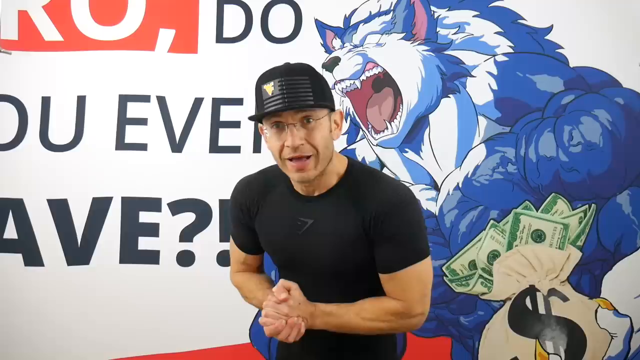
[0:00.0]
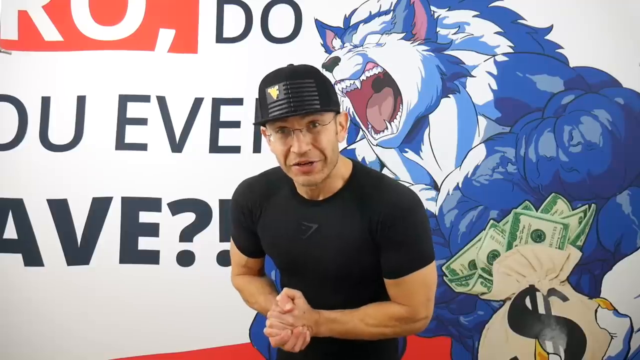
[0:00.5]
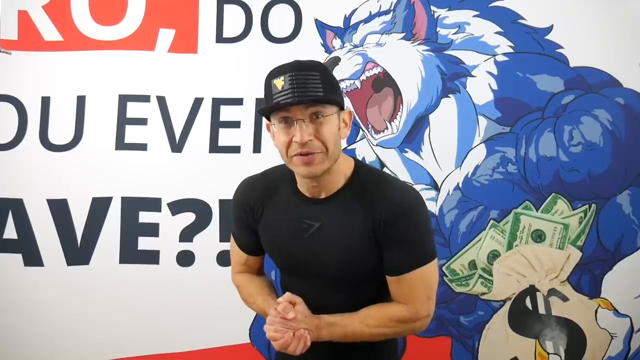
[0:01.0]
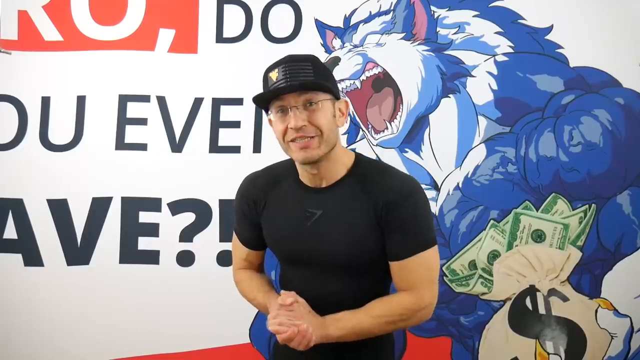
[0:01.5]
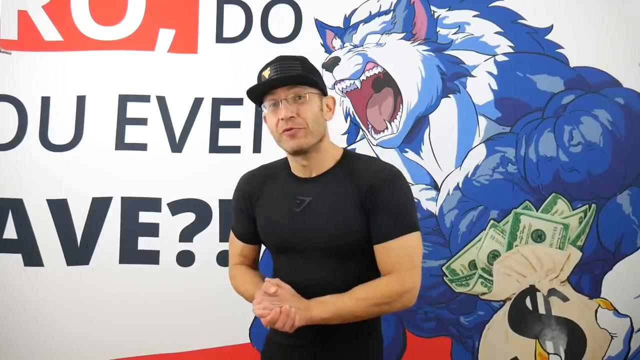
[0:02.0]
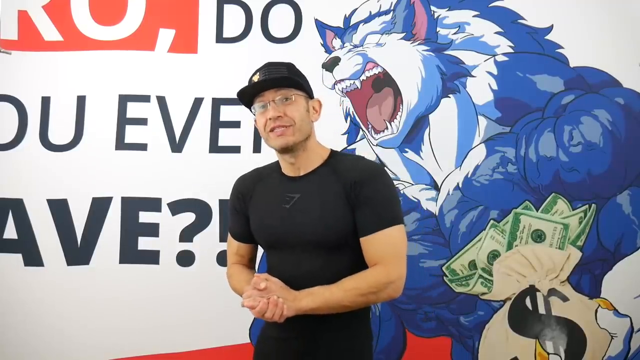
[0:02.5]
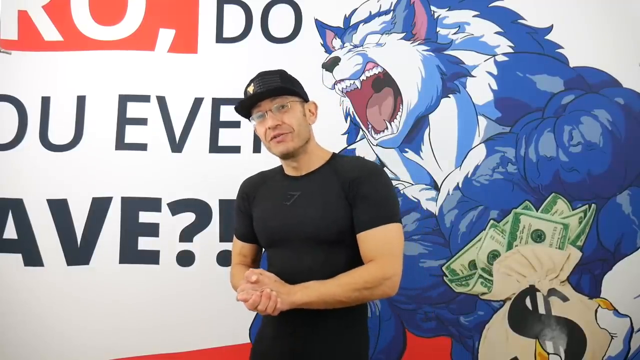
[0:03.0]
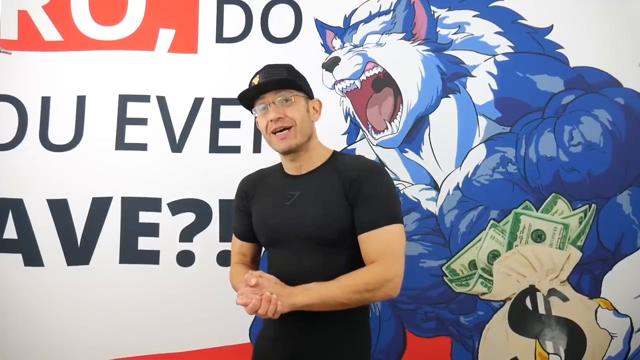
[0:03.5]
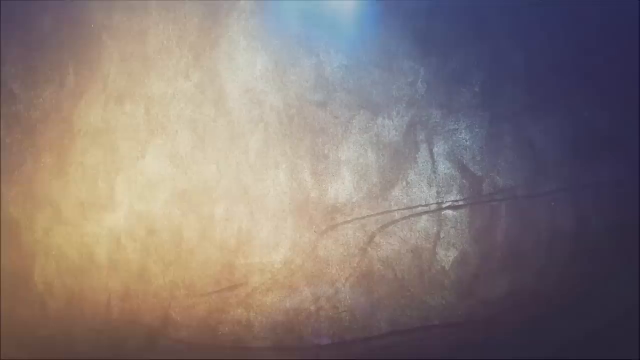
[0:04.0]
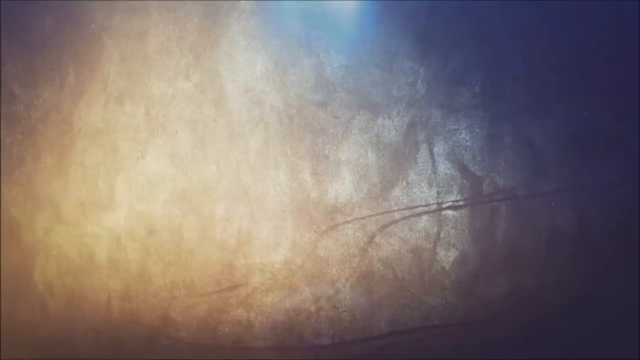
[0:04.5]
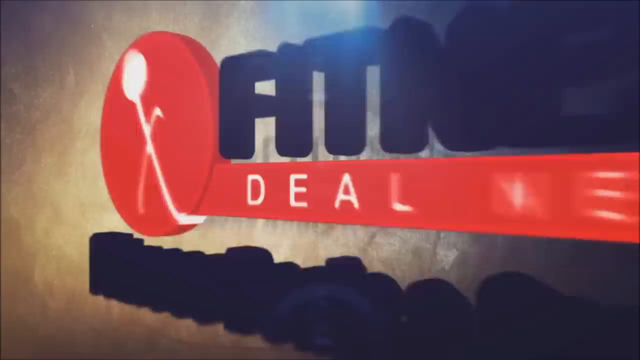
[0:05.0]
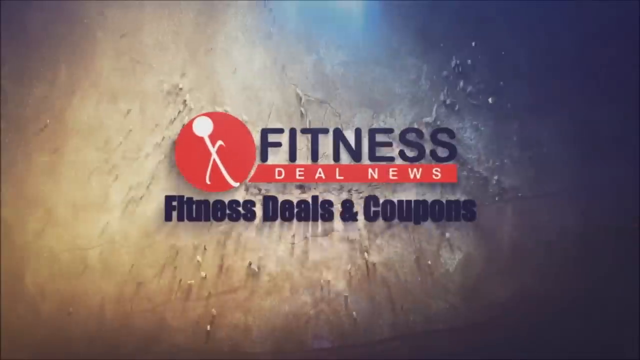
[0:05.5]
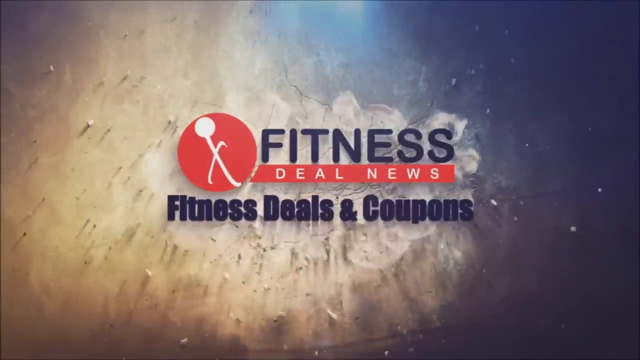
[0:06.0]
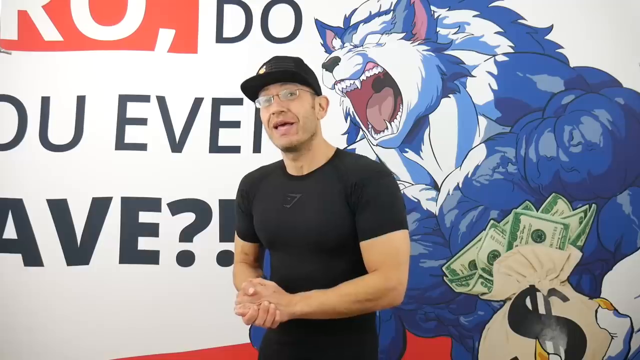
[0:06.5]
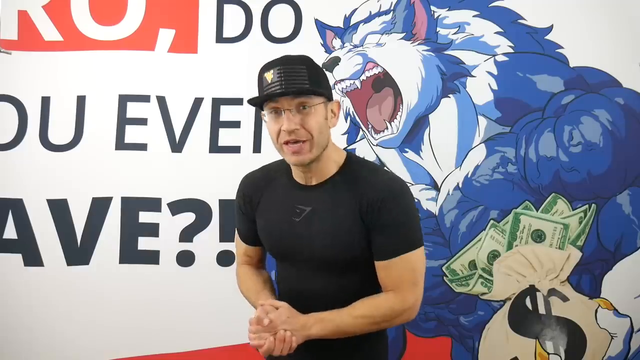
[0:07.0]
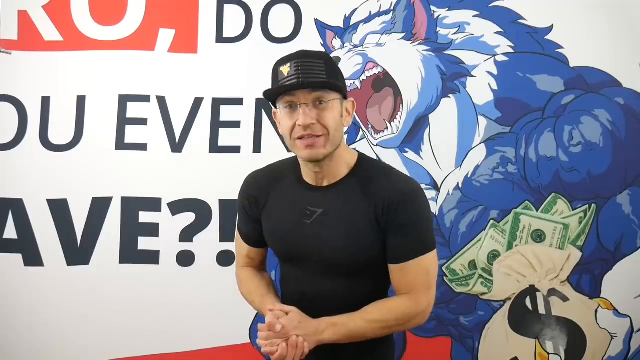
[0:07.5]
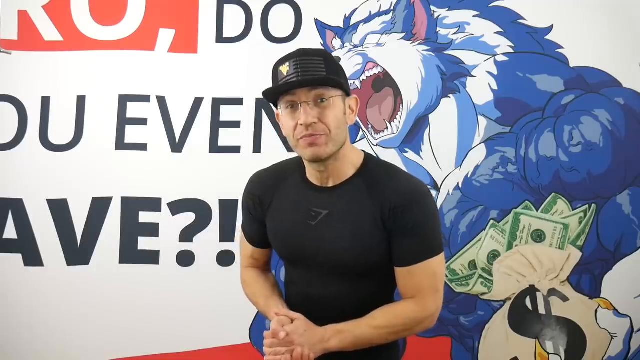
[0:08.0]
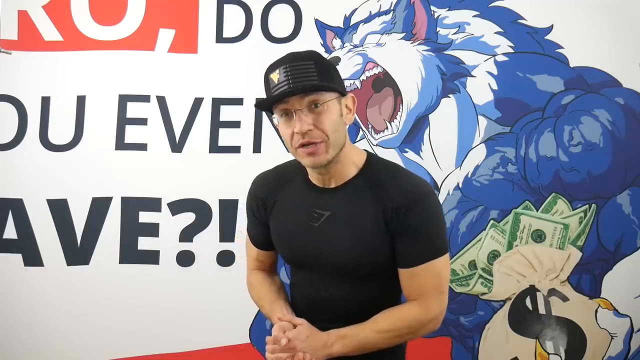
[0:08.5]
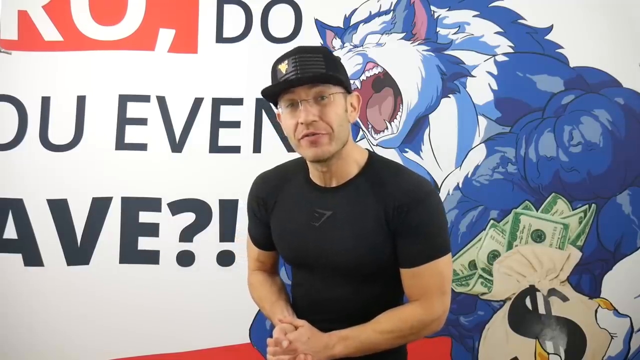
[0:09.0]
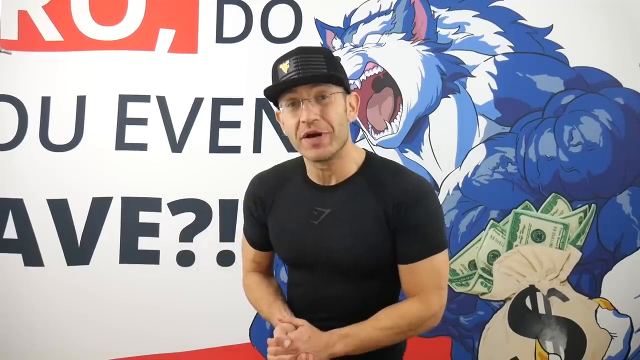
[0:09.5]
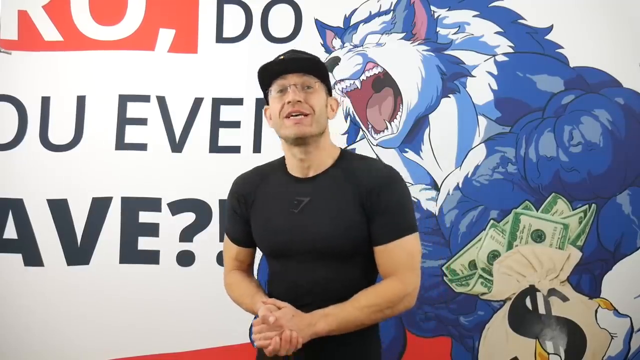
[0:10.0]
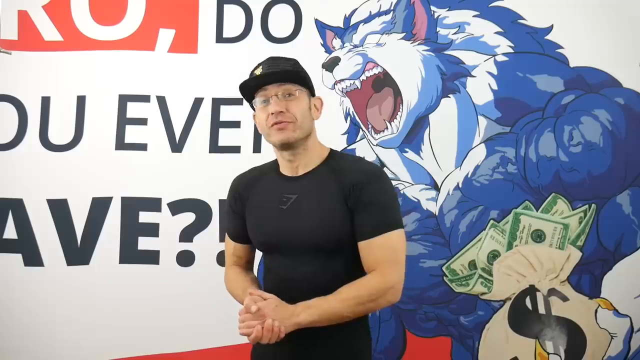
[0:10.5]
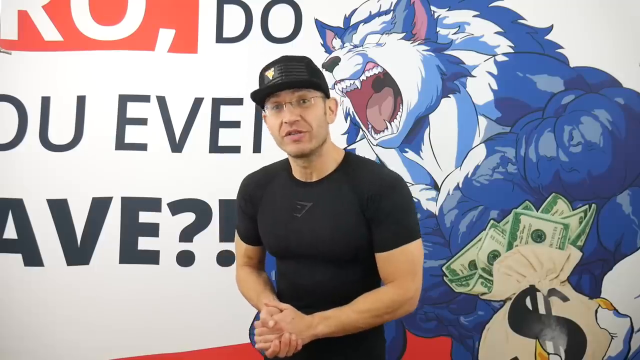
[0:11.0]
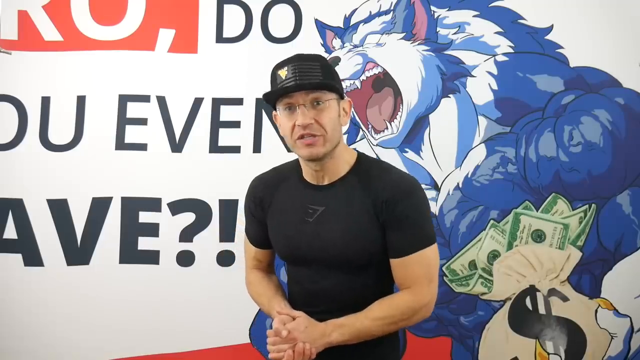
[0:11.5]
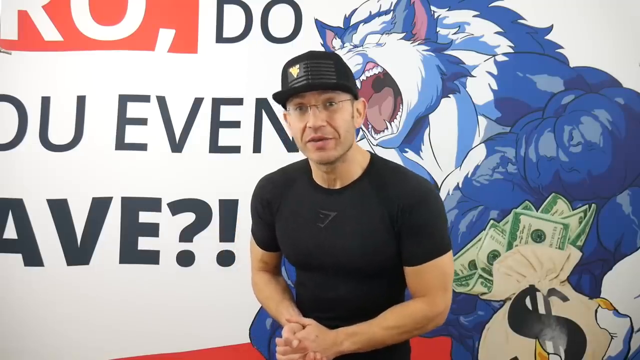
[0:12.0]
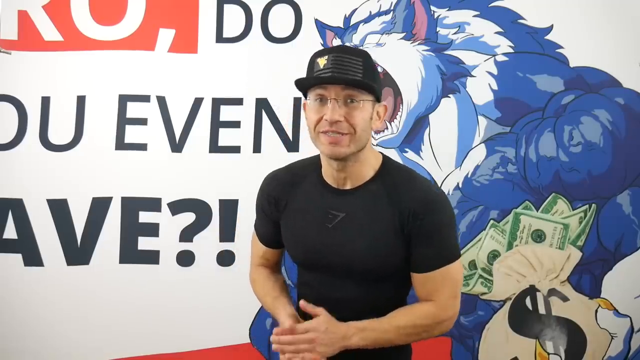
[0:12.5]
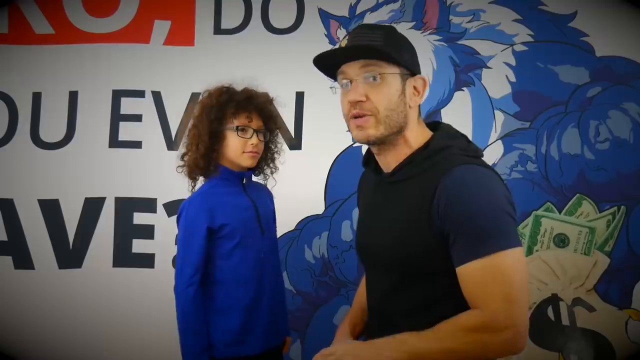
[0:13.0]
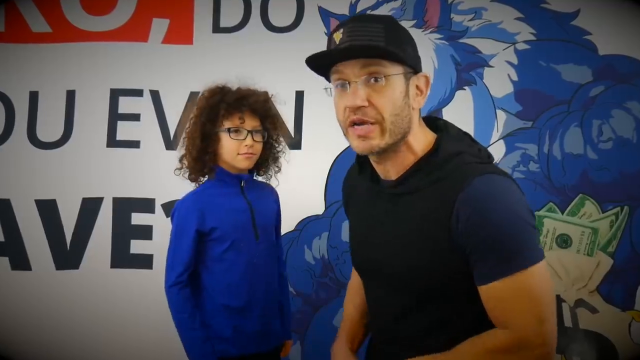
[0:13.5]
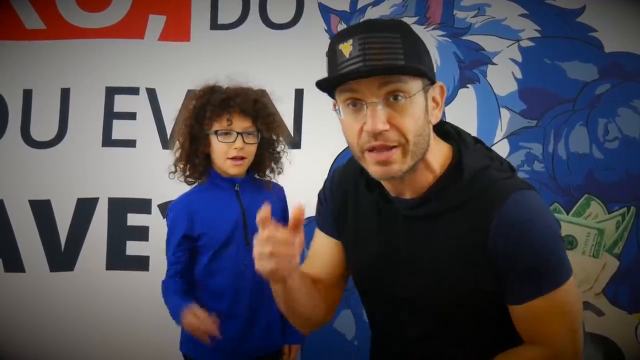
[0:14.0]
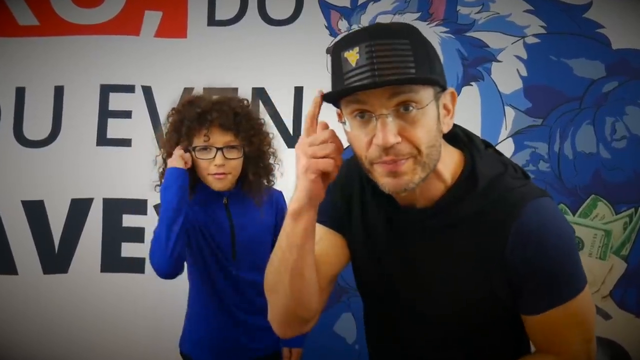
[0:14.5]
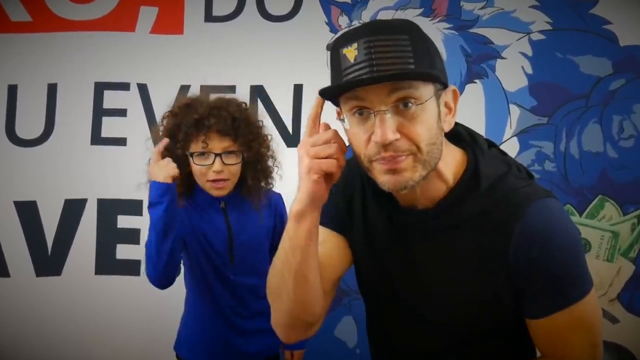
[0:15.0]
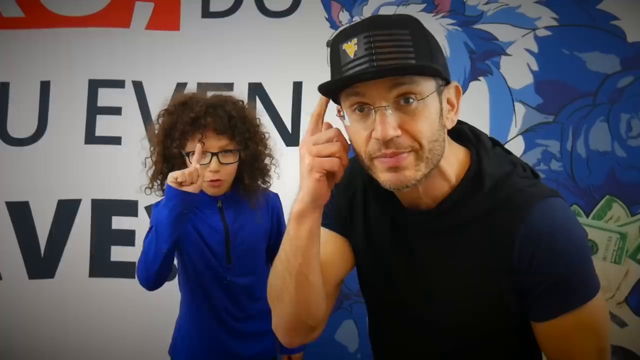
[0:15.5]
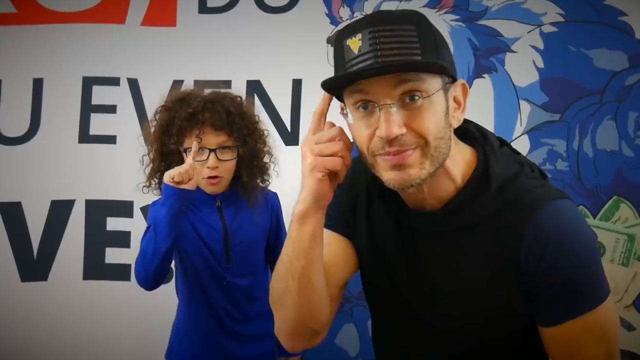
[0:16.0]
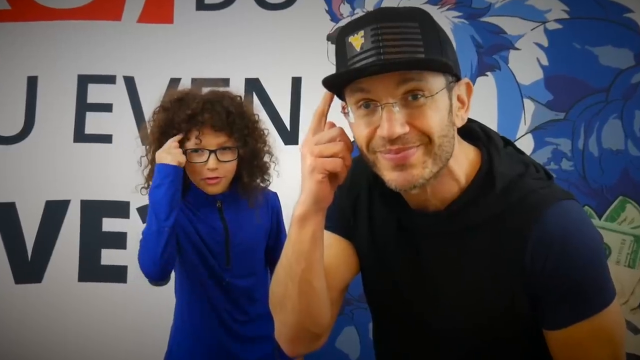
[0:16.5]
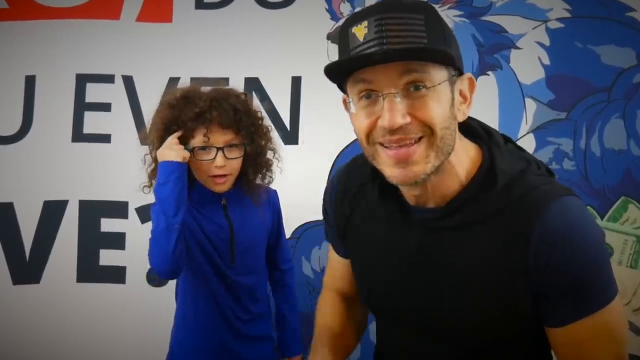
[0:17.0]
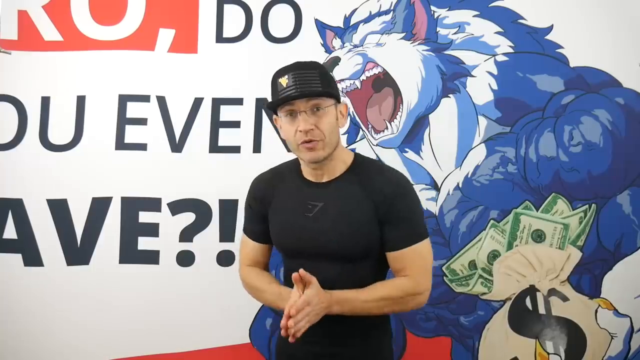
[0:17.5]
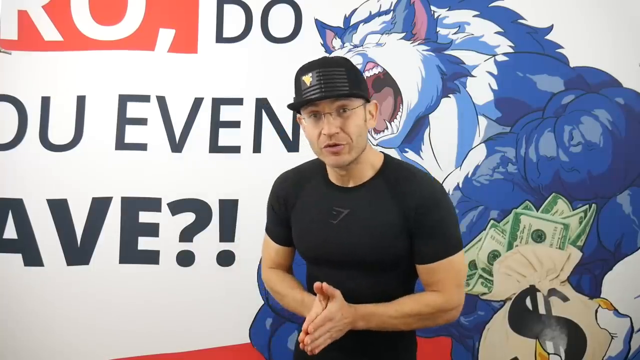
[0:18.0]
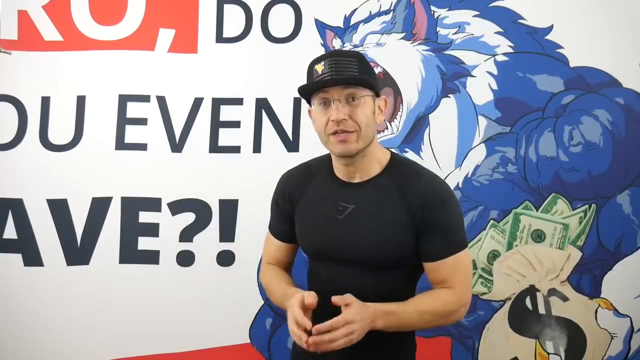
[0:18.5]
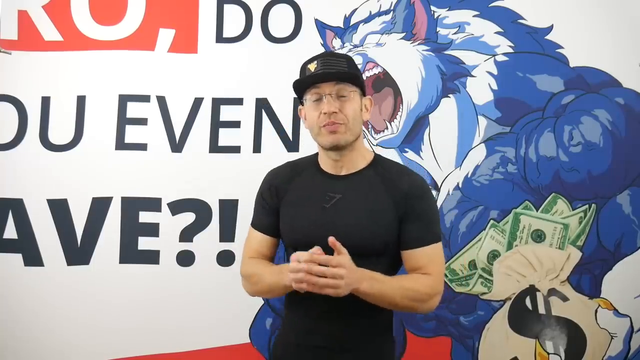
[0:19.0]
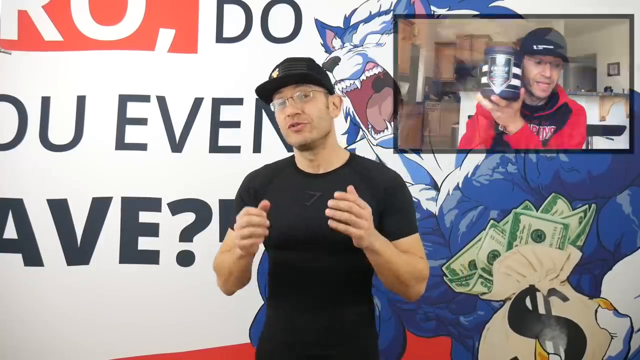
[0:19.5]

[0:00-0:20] A man in a short-sleeved black t-shirt and a black cap looks at the camera and speaks. Behind him is a backdrop showing what looks like an animated, human-like wolf that is blue and white and growling, and it looks like he is holding a bag of cash in one of his hands. The scene changes to a title card that reads "Fitness Deal News, Fitness Deals and Coupons." It then returns to the man standing in front of the backdrop, which has writing on its left side that is slightly obscured. Next, the man is again in front of the backdrop, but now a young girl appears next to him. She wears a bright blue top that zips up in the front and has dark curly hair and glasses. They both lean into the camera and touch their temples with their right index fingers, indicating they are thinking about something. The girl then waves her index finger back and forth at the camera before touching her temple again.